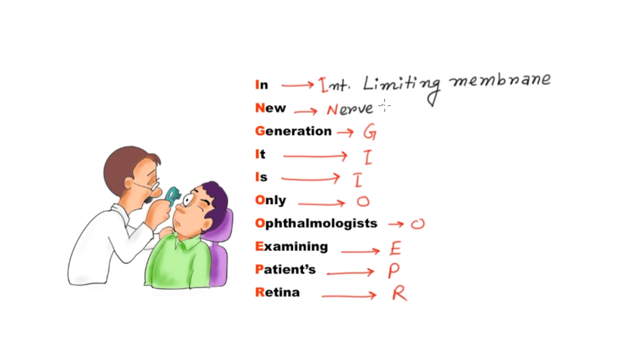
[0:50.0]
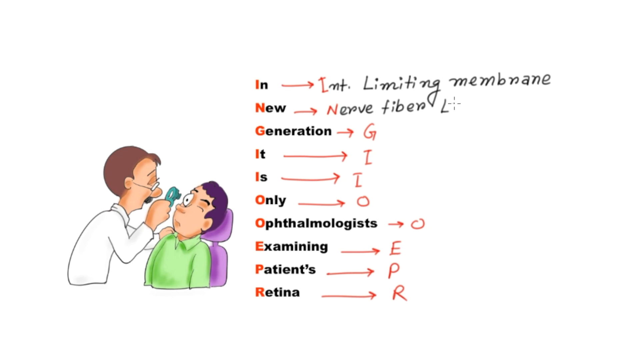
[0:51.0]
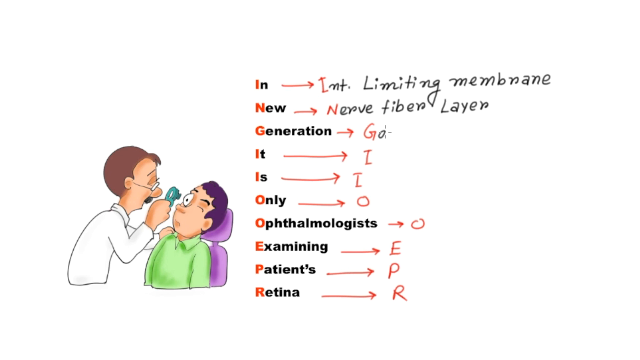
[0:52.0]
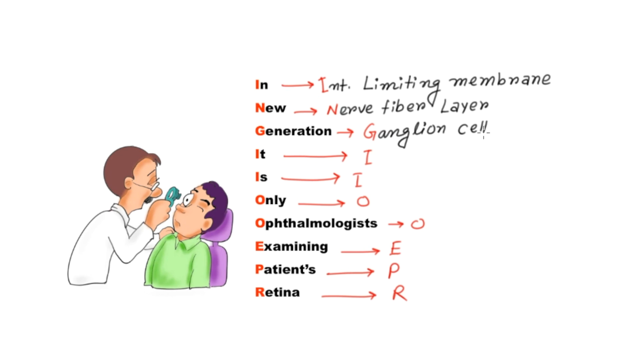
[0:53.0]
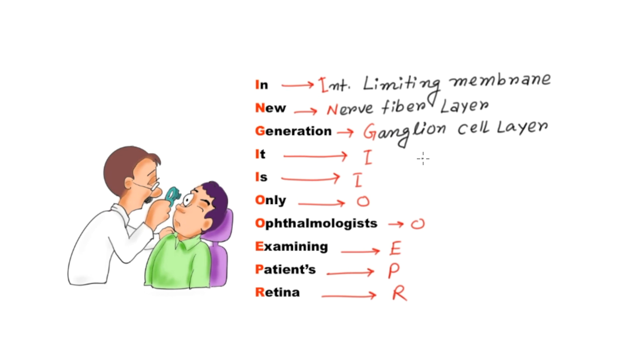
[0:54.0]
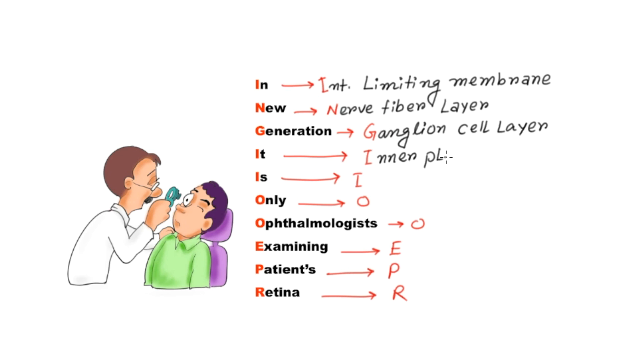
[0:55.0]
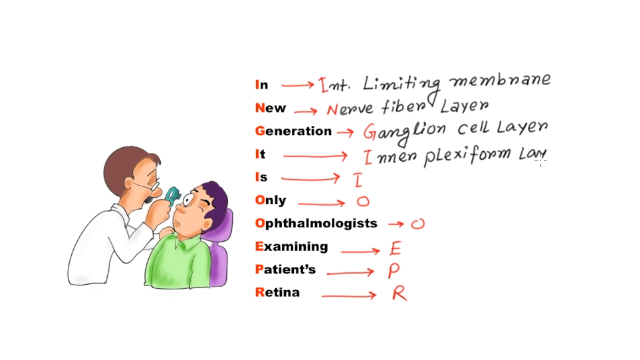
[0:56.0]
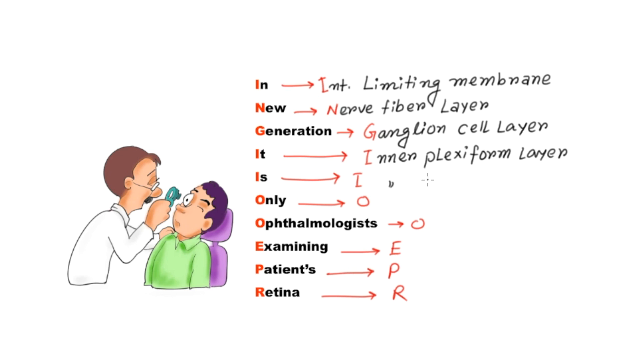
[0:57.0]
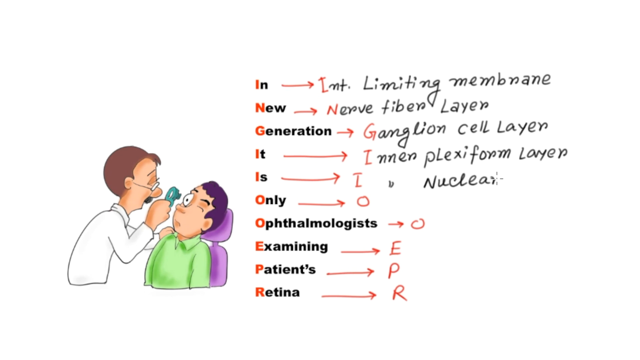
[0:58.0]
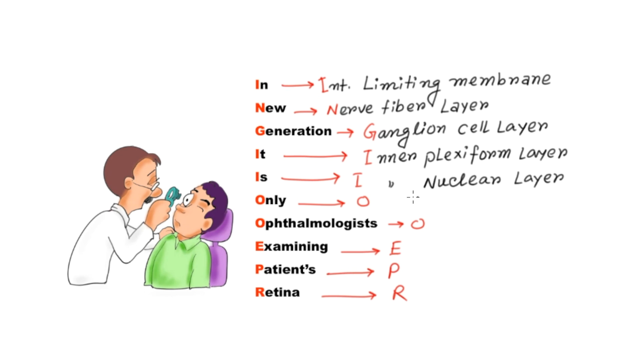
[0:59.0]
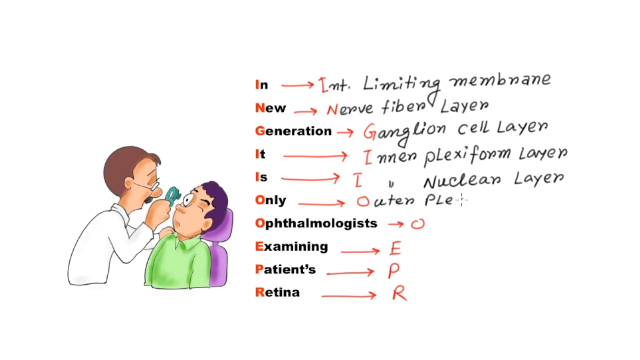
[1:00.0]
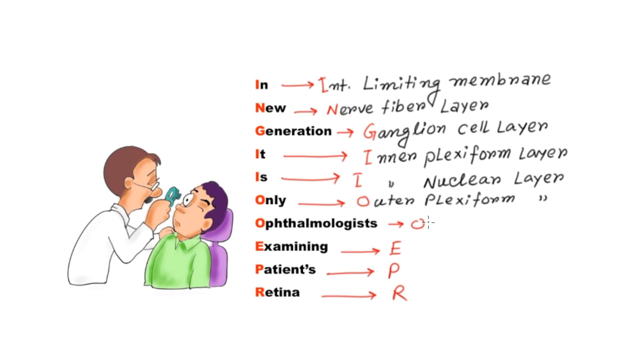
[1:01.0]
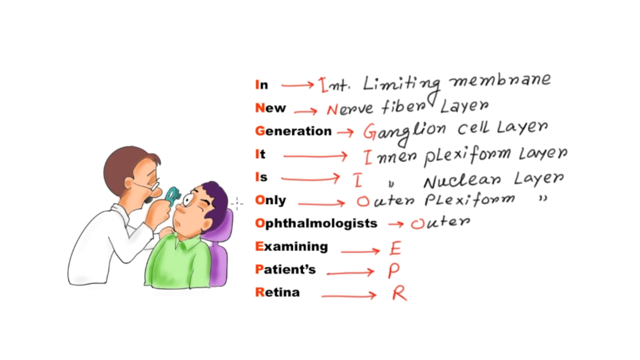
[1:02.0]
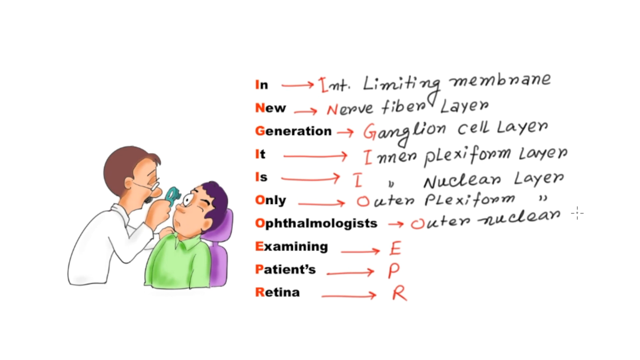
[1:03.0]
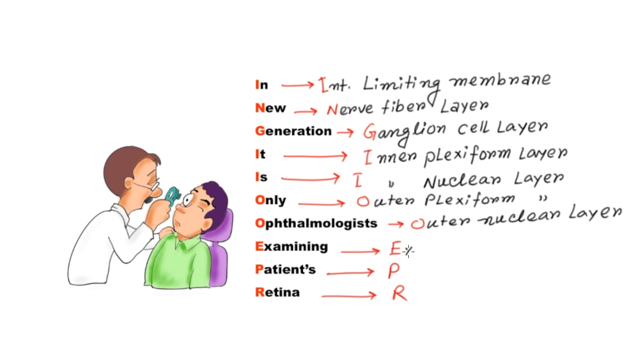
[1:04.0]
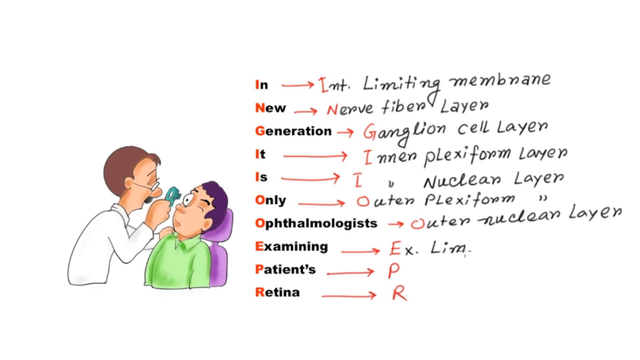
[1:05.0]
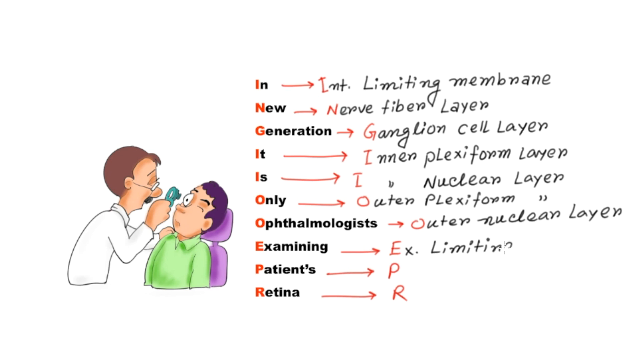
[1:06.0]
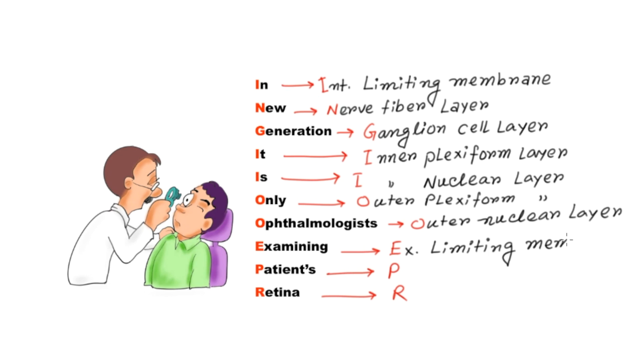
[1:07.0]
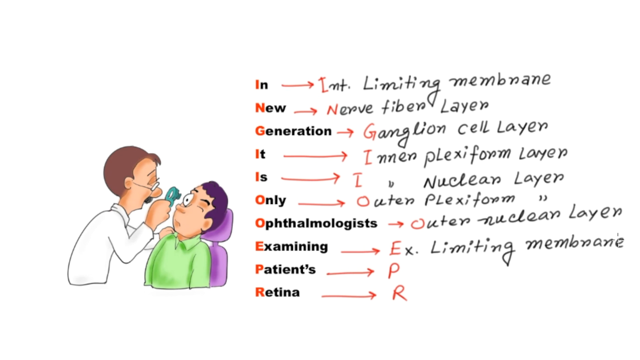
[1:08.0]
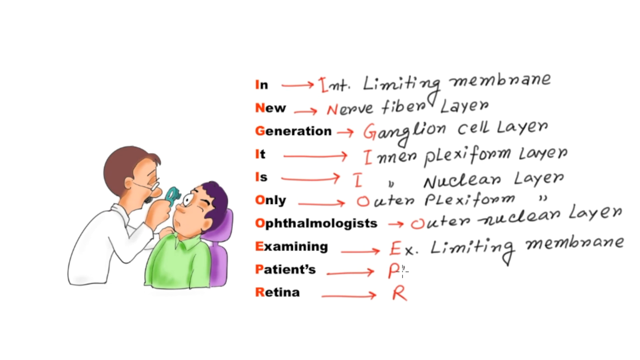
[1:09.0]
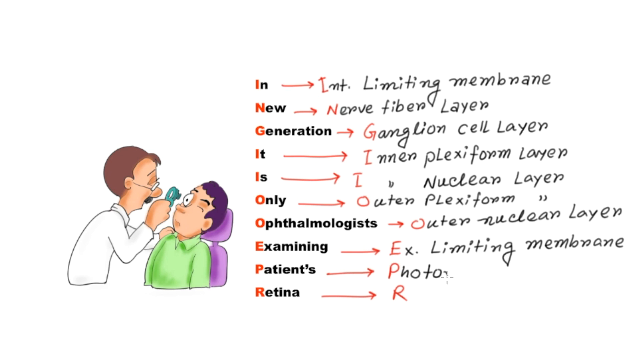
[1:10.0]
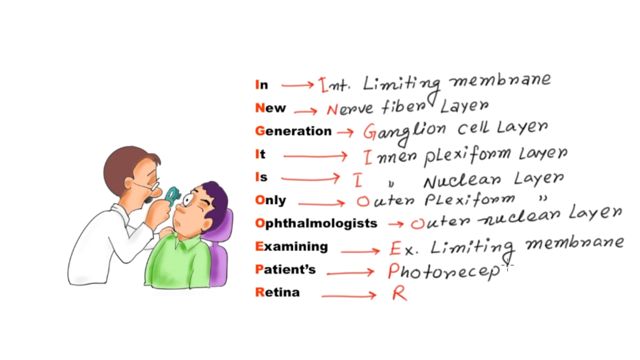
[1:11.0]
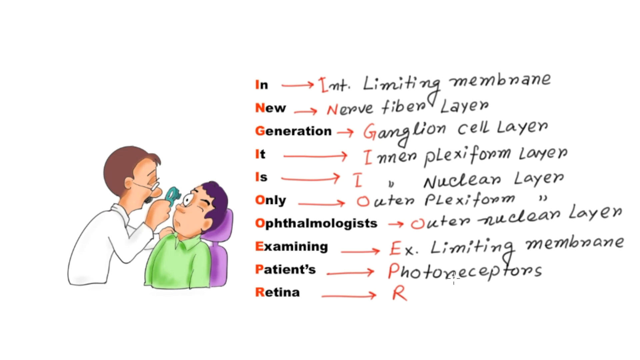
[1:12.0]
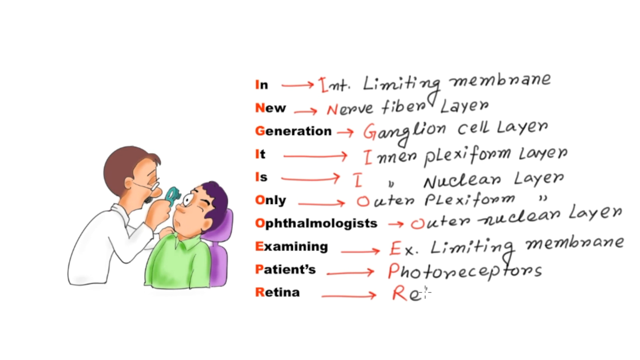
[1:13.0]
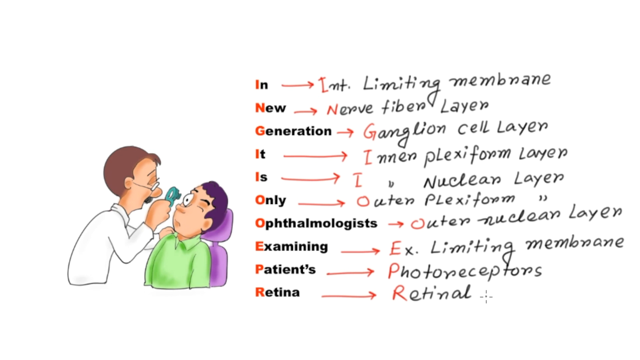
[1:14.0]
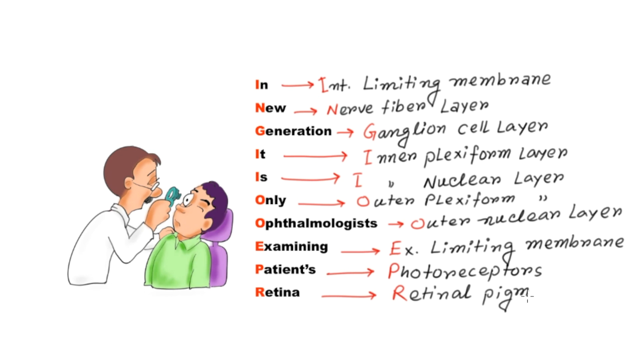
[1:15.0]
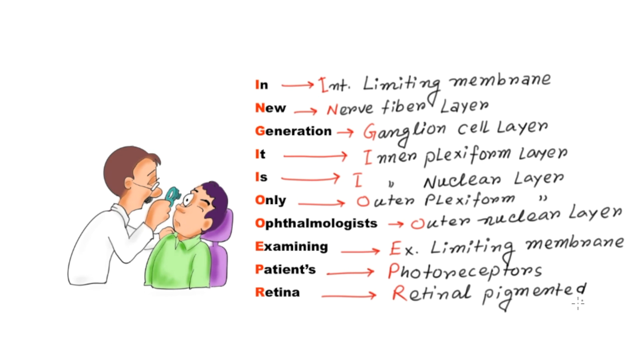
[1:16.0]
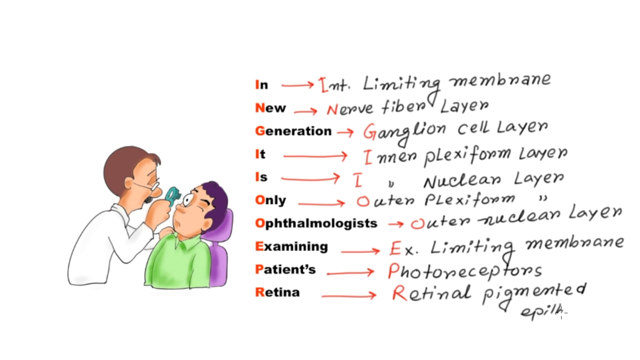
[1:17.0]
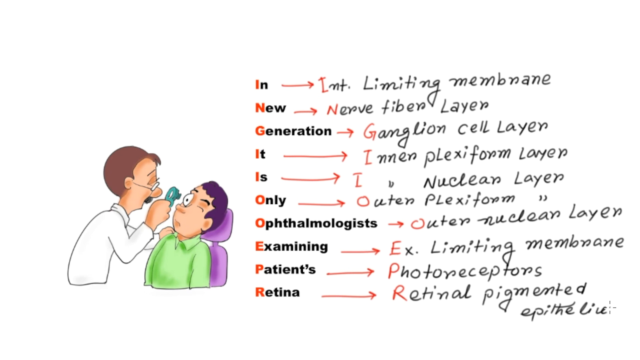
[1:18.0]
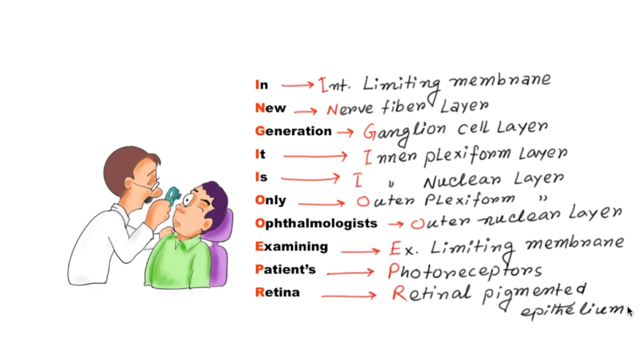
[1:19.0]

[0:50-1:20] At the bottom left is a picture of a doctor looking through a scope into his patient's open right eye. The patient, on the bottom right, wears a green shirt, is sitting on a purple chair, and looks upwards with his right eye open and his left eye closed. In the middle is a list of words reading "in new generation, it is only ophthalmologists examining patients' retina", with the first letter of each word in orange. Next to each word is a right arrow with the first letter in red. The top entry reads "int-limiting membrane" and the one below it reads "nerve", and a mouse writes out the words: it adds "fiber layer", then "ganglion cell layer" for the G, "inner plexiform layer" for the I, "inner nuclear layer" for the orange I, "outer plexiform" for the O, "outer nuclear layer" for the next O, "X-limiting membrane" for the E, "photoreceptors" for the P, and "retinal pigmented epithelium" for the R.